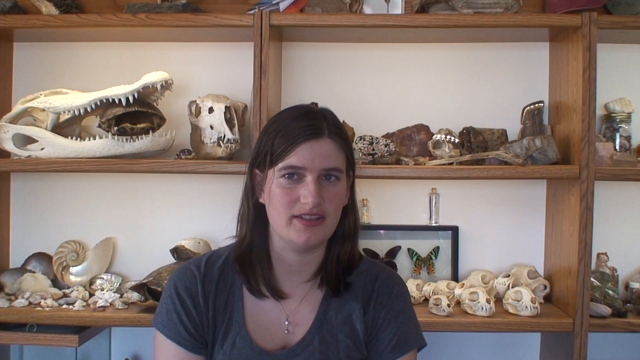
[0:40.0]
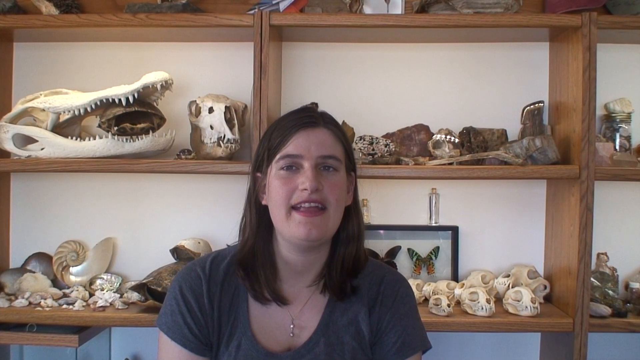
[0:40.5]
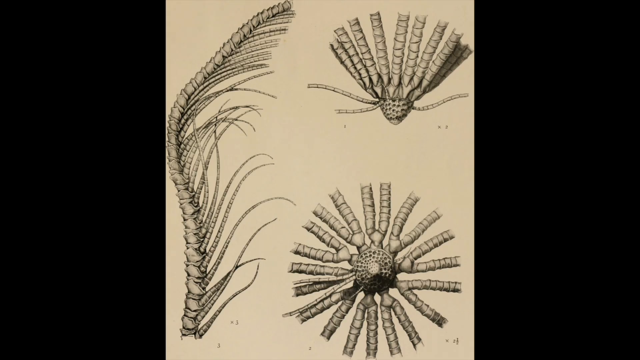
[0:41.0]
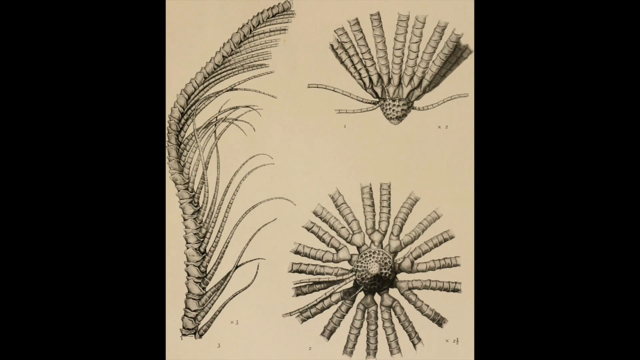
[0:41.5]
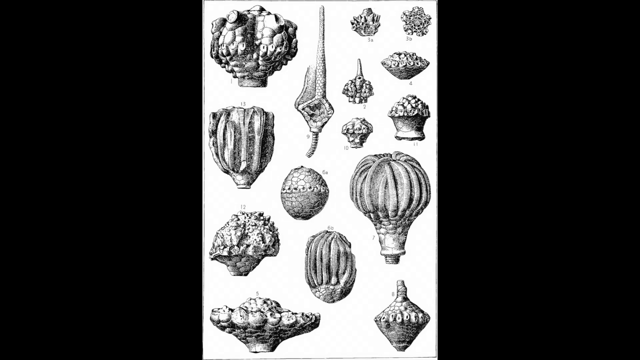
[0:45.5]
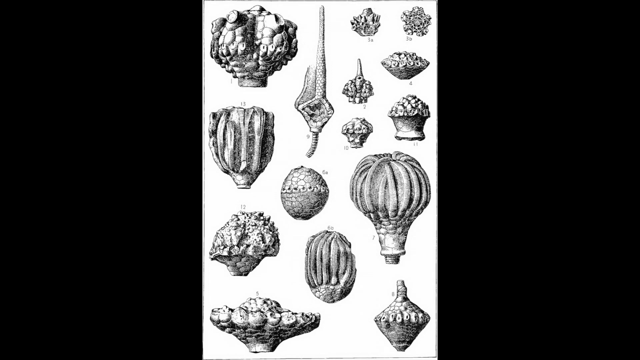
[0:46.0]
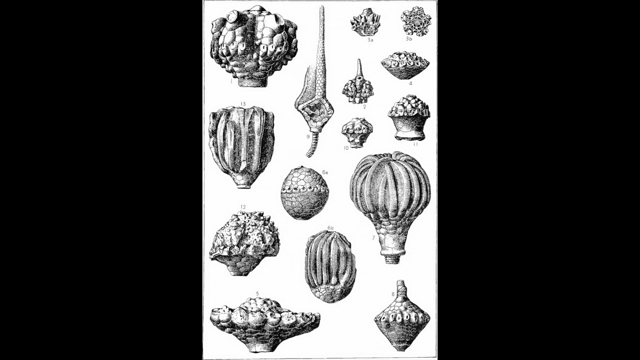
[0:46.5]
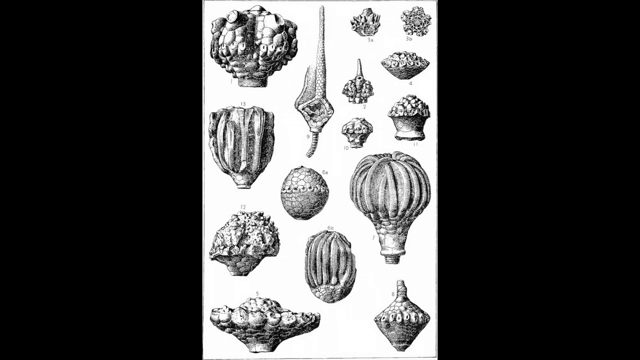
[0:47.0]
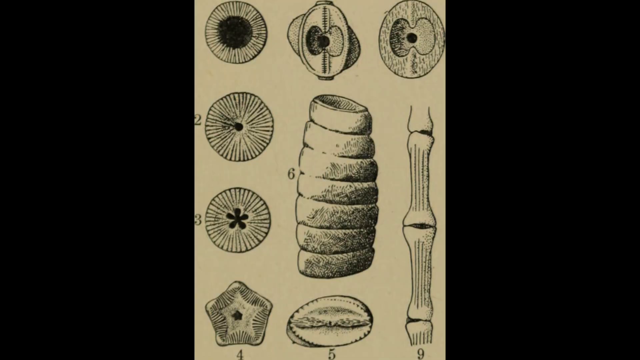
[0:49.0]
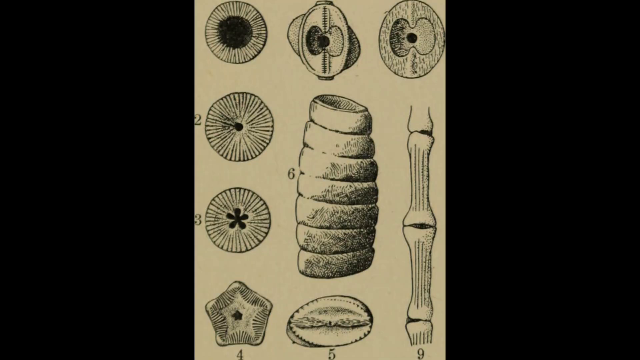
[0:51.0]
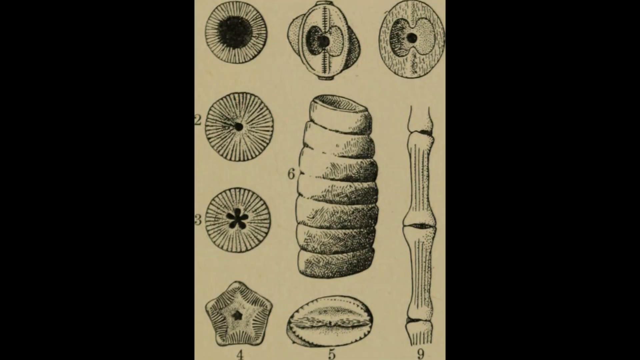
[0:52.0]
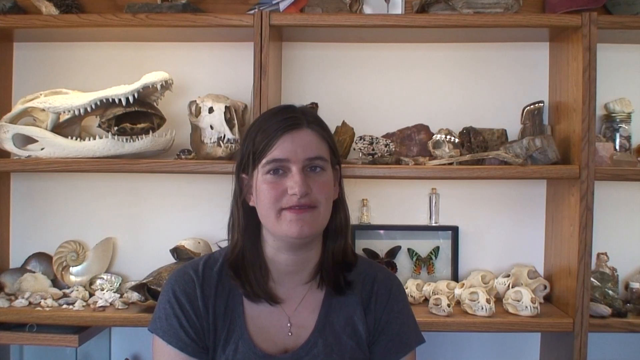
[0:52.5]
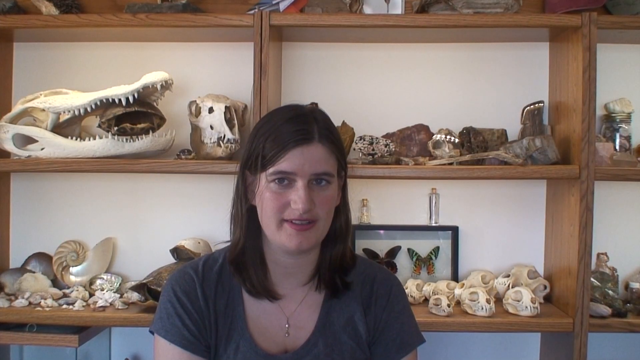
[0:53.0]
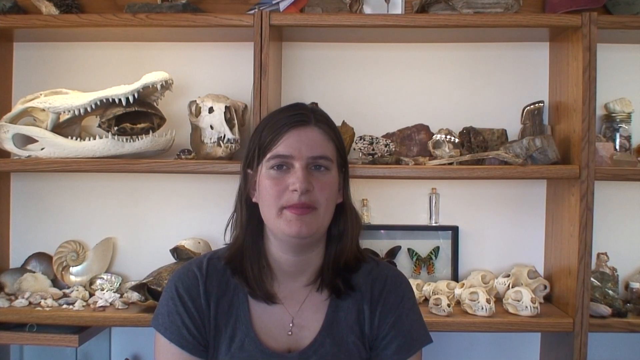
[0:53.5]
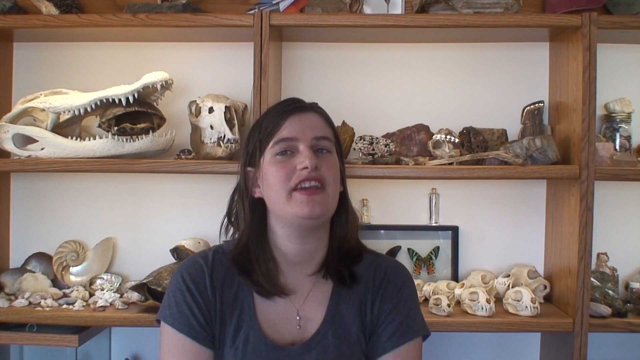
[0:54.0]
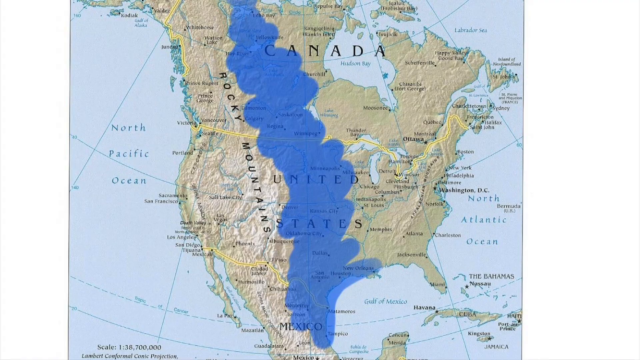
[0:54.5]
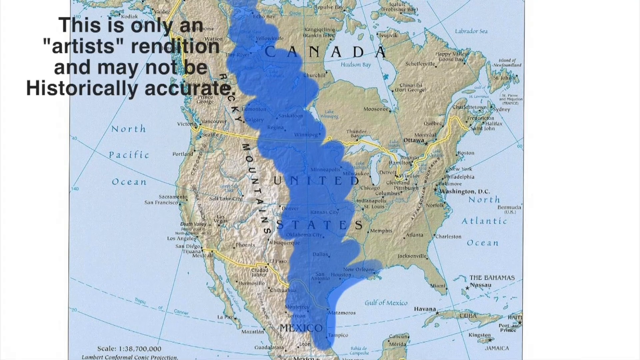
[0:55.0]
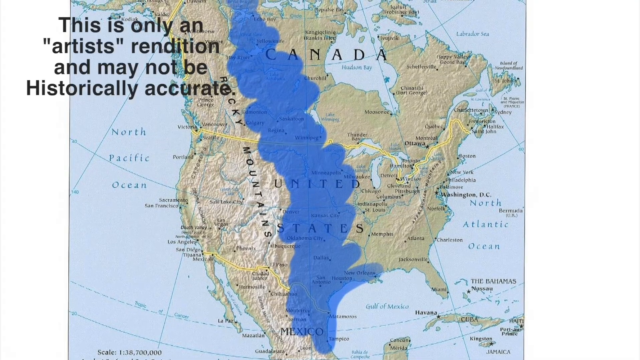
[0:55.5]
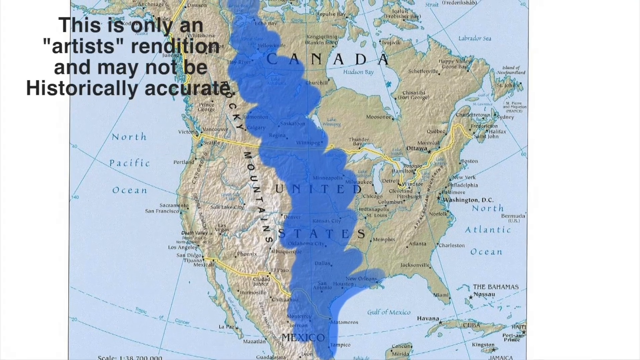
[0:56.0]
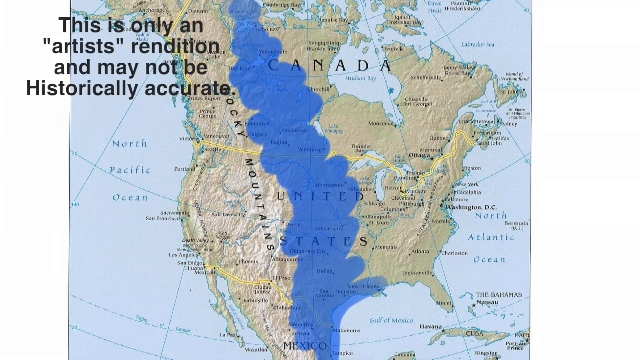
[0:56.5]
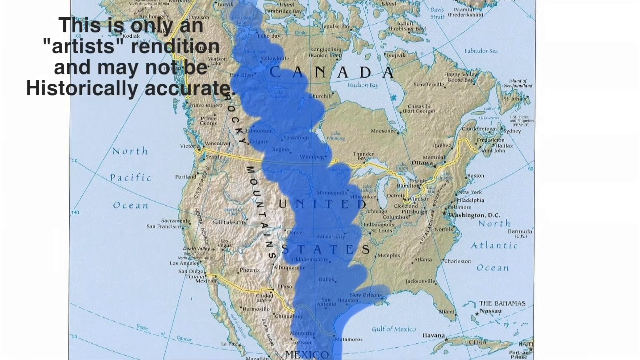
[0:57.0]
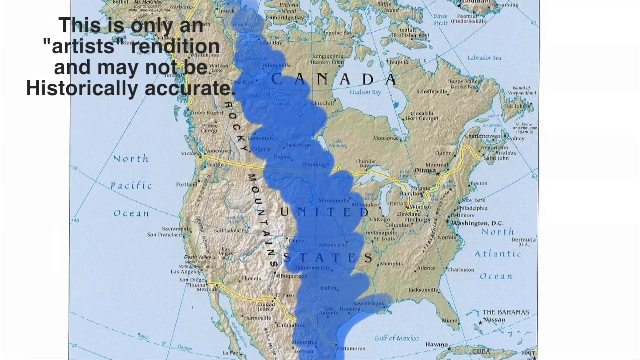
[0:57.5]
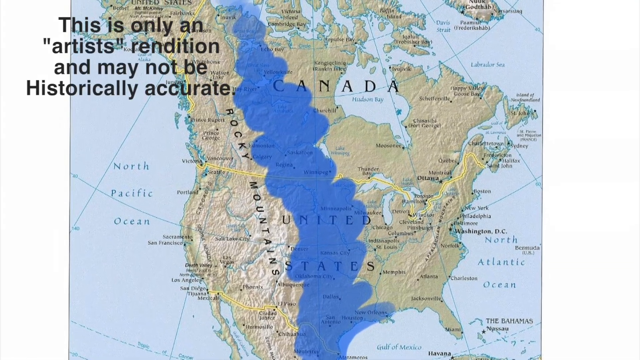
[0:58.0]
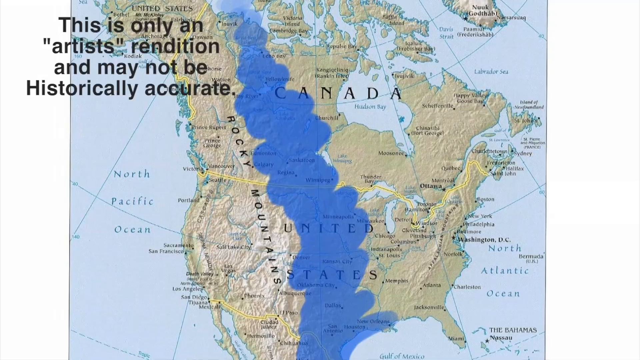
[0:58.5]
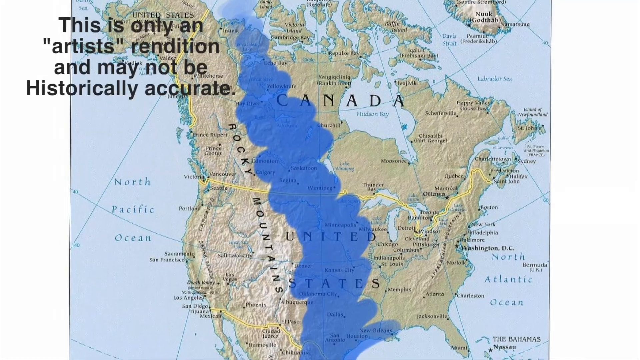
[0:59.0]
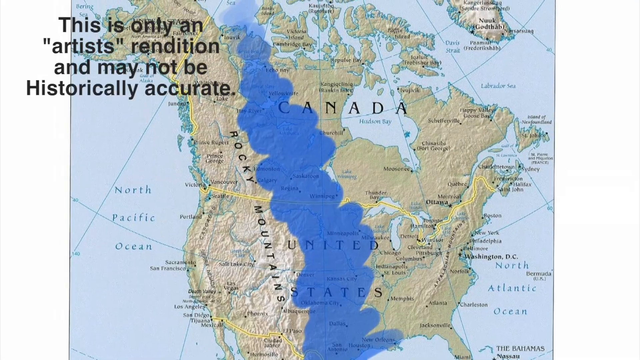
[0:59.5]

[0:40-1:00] The speaker remains in the center of the screen, with the many wooden shelves behind her filled with various fossils, skulls and other oddities. The woman, who has long, straight, parted black hair and rosy skin, continues to speak. The scene transitions to another drawing, this one showing various angles of a fossil, then to another image of fossils, likely from a textbook or some sort of learning material, and then to fossils with numbers beside them. The scene returns to the speaker, then transitions to a map showing Canada and the United States with some sort of blue marking. Text in the top left states that this is only an artist's rendition and may not be historically accurate. The camera pans up.